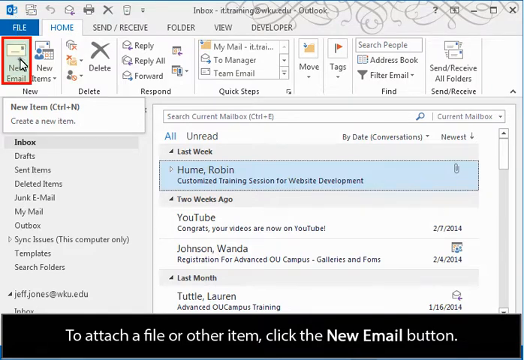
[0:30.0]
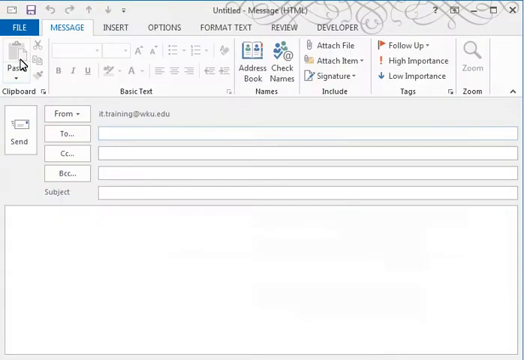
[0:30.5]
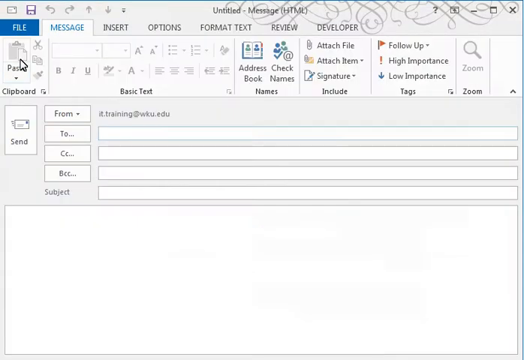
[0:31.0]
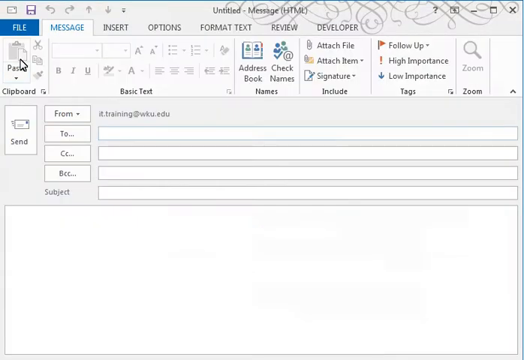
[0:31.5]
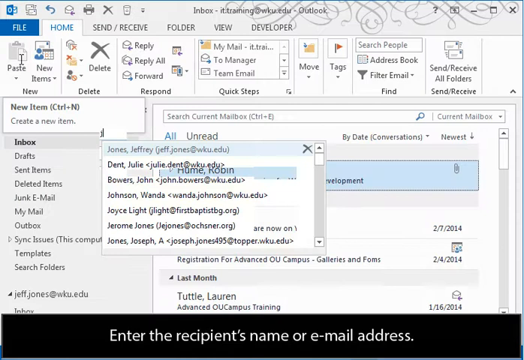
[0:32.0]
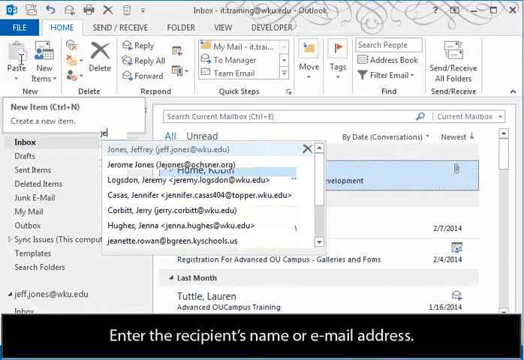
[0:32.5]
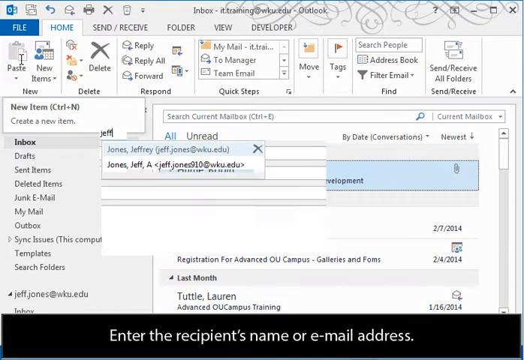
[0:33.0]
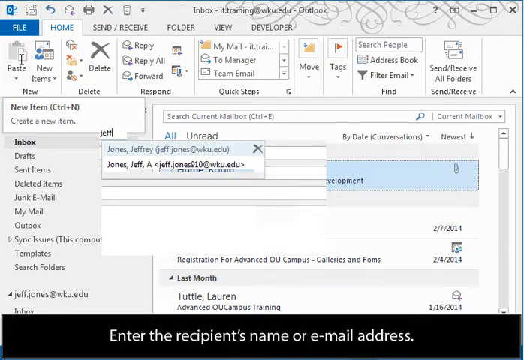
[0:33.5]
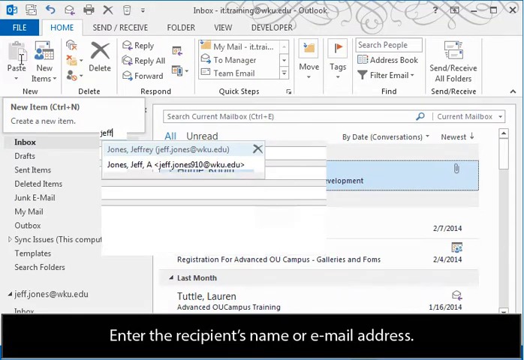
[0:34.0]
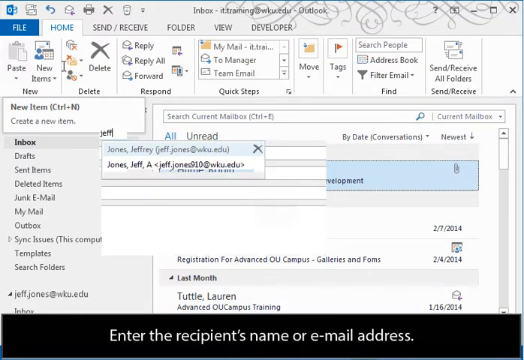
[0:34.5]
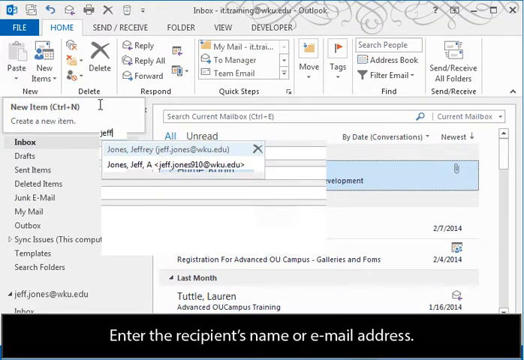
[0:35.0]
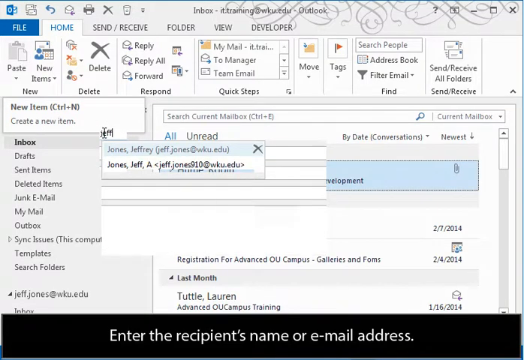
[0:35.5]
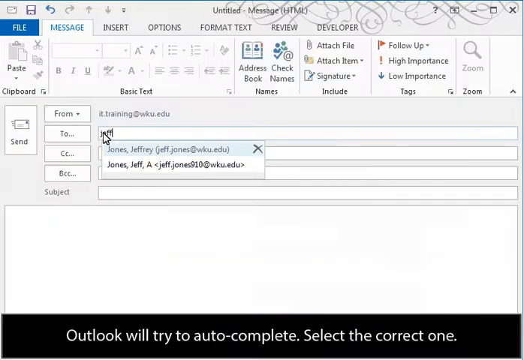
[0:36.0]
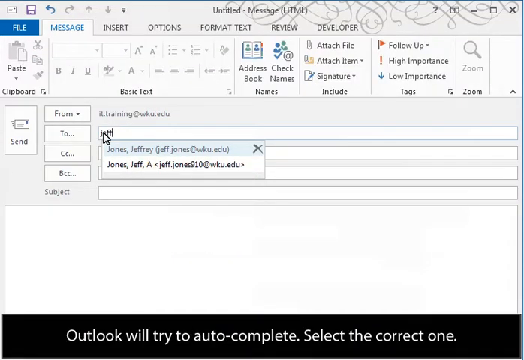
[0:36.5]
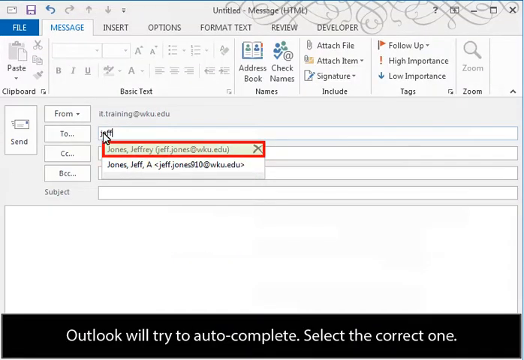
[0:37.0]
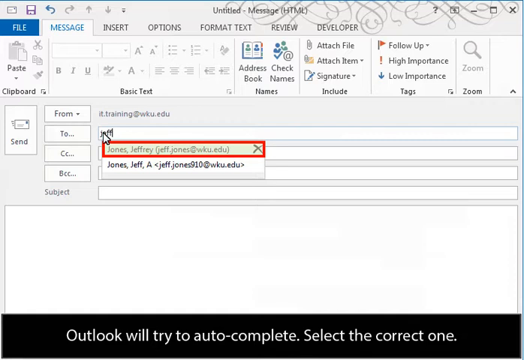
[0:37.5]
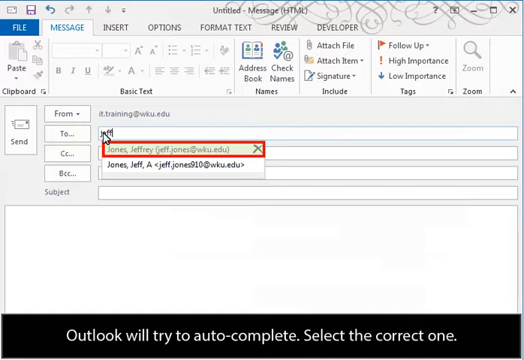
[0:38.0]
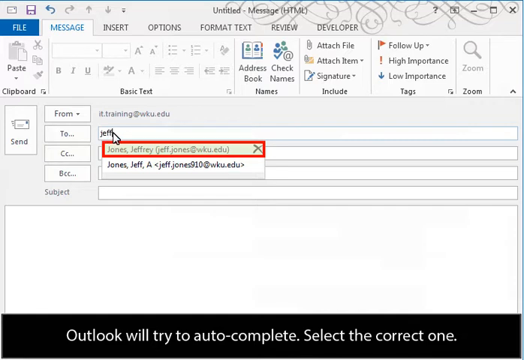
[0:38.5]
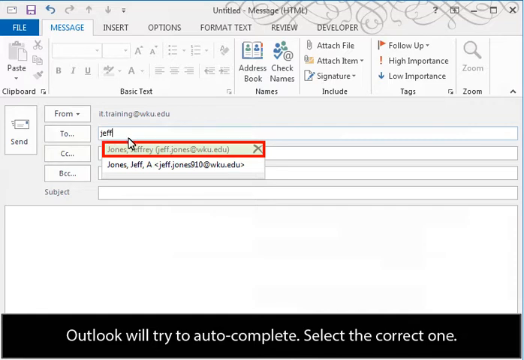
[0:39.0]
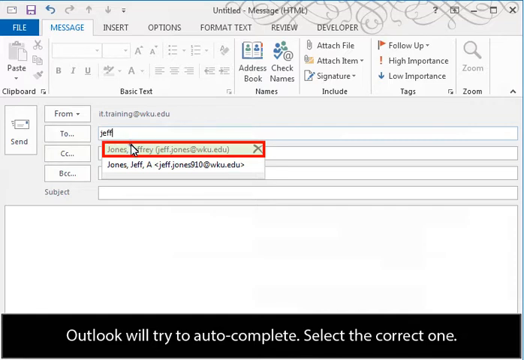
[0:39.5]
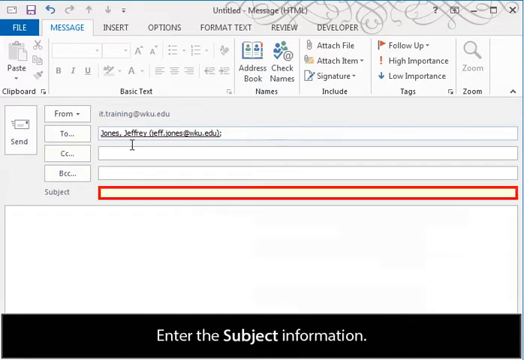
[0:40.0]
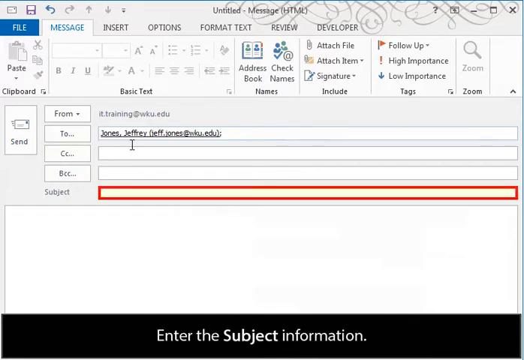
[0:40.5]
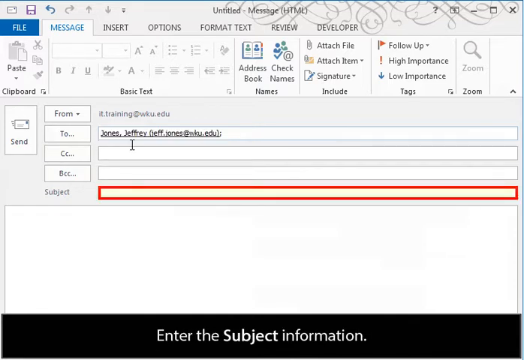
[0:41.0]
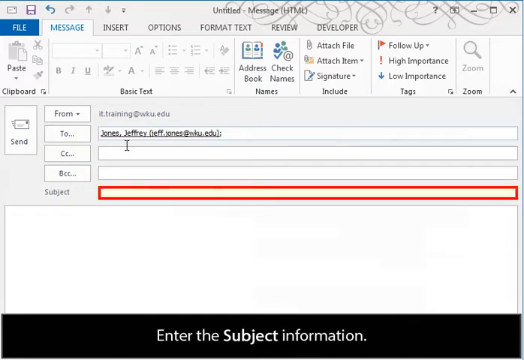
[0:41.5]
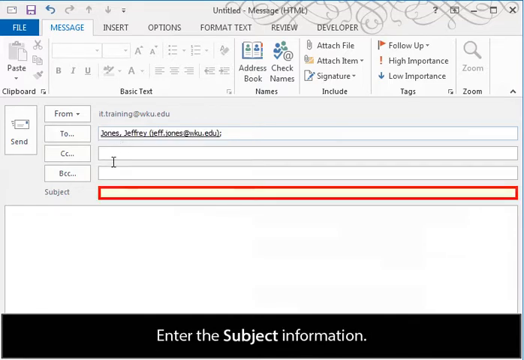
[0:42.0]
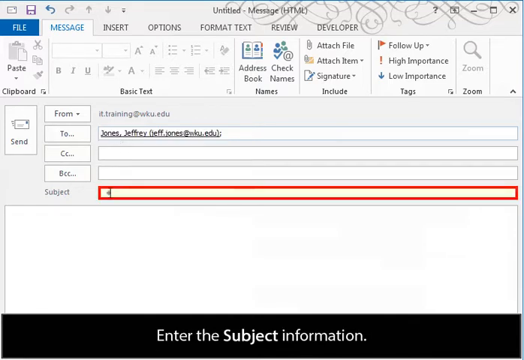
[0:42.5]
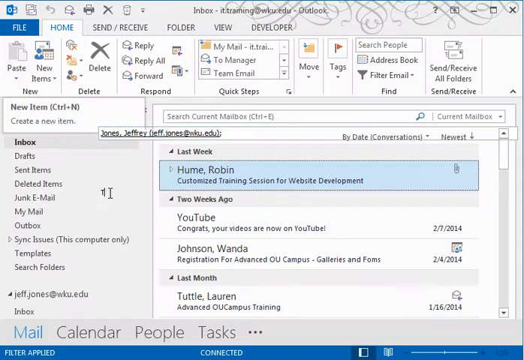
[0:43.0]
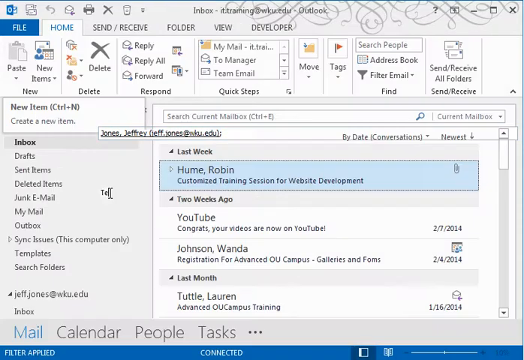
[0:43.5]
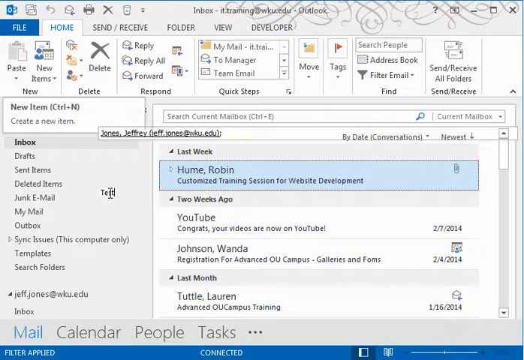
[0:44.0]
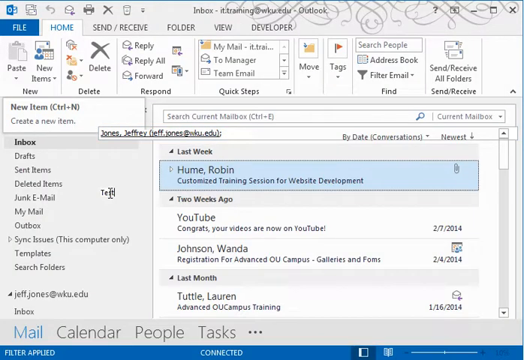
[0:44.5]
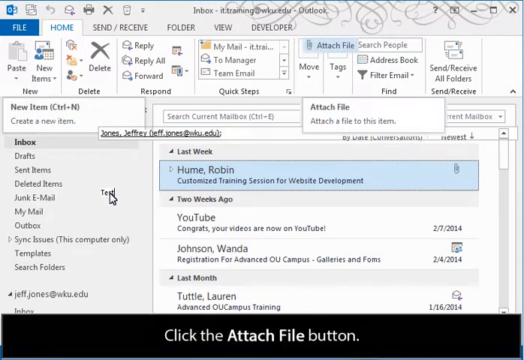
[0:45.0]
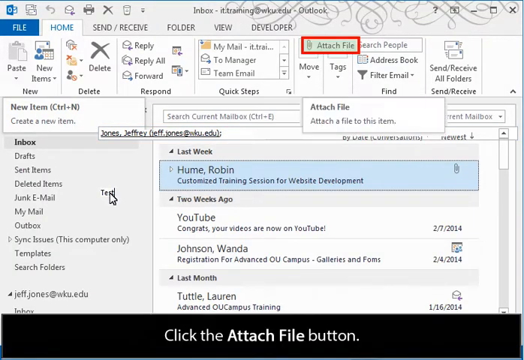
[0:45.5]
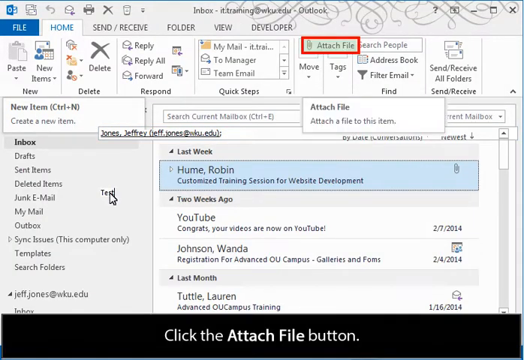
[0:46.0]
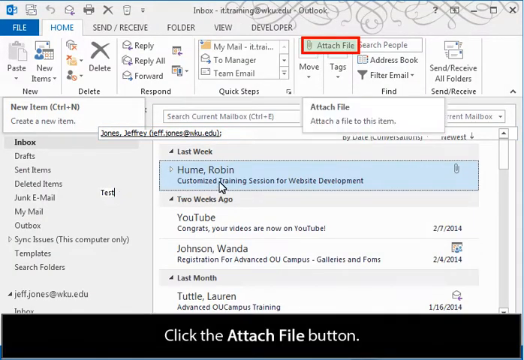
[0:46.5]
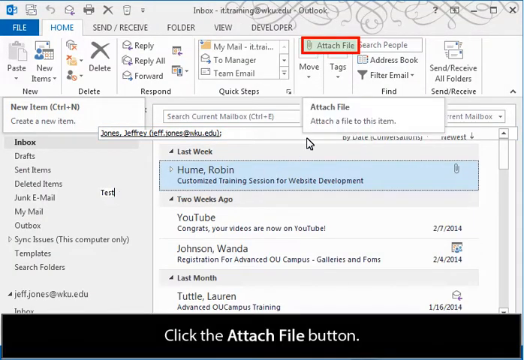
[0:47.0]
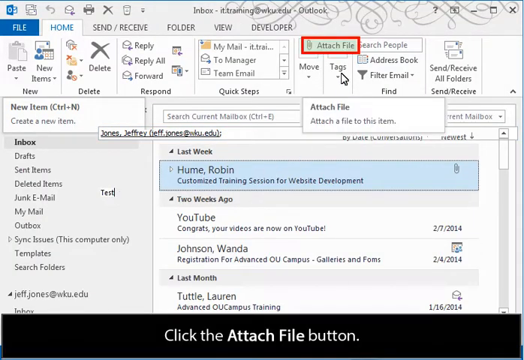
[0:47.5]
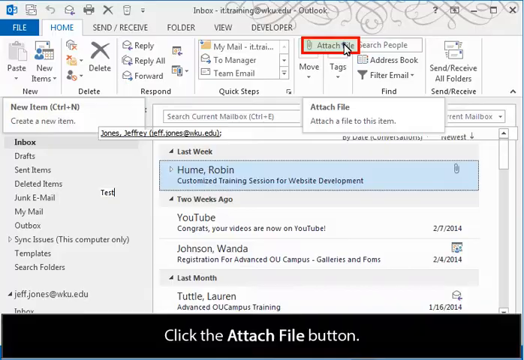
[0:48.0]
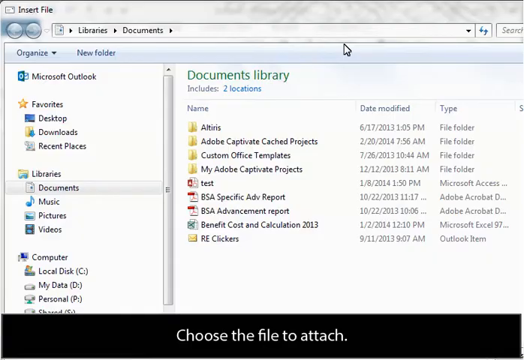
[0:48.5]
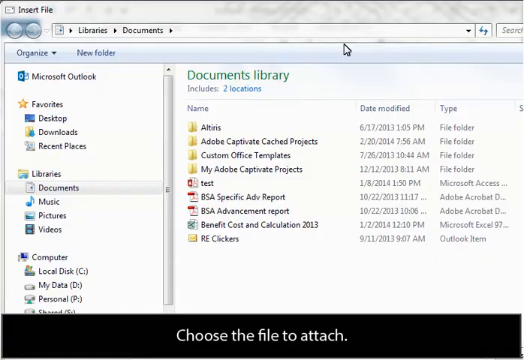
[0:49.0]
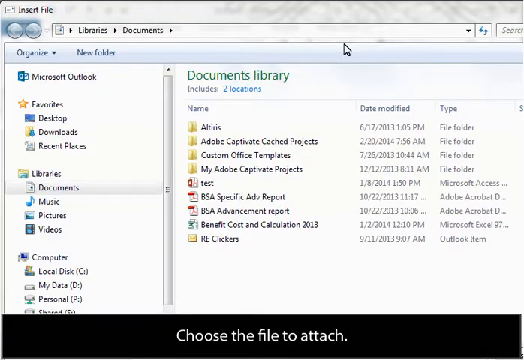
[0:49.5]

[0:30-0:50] The Outlook inbox for it.training@wku.edu is shown, with the new email button highlighted by a red square, and the cursor clicks it. A new message tab opens, with the From field already filled in with it.training@wku.edu. The user clicks the To text box, and a drop-down appears with two options for people named Jeffrey Jones and Jeff Jones. The first option is highlighted with a red box, the user clicks it, and that email populates the To field. The subject box is highlighted with a red frame; the user clicks it and types "test." The attach file button on the top toolbar is highlighted with a red frame, and the user clicks it, bringing up another window showing files to select for attachment.